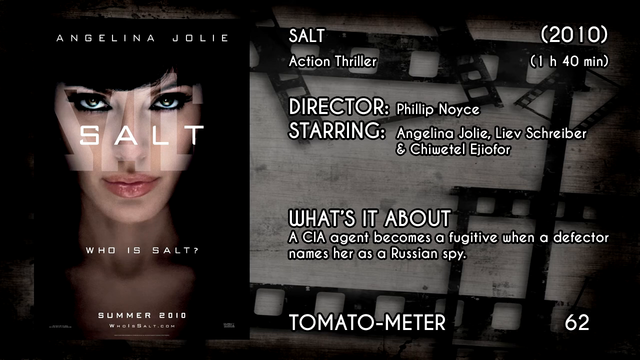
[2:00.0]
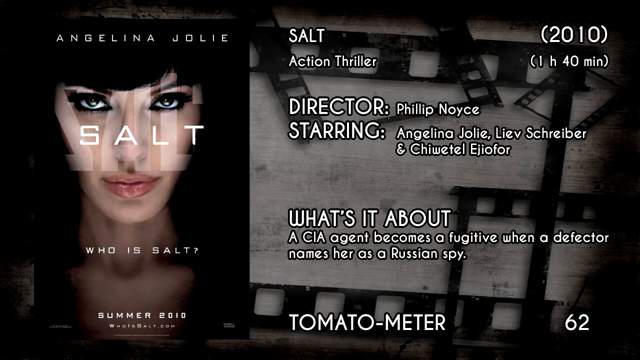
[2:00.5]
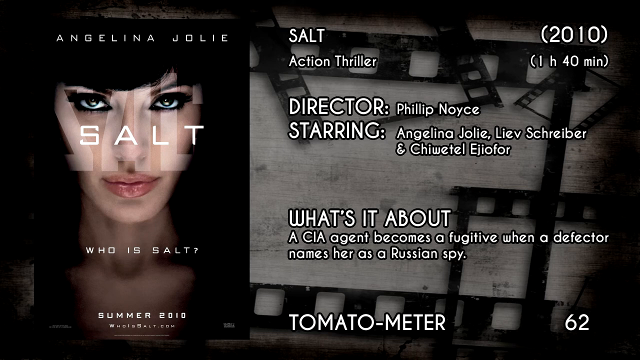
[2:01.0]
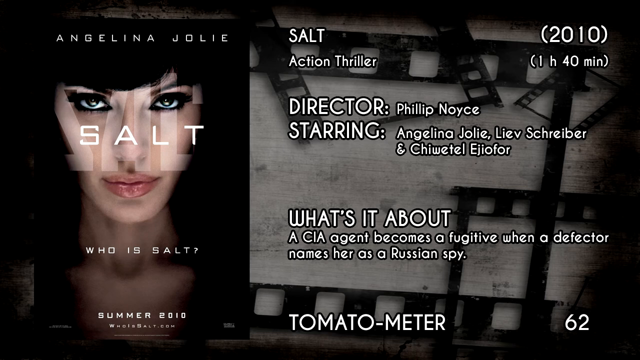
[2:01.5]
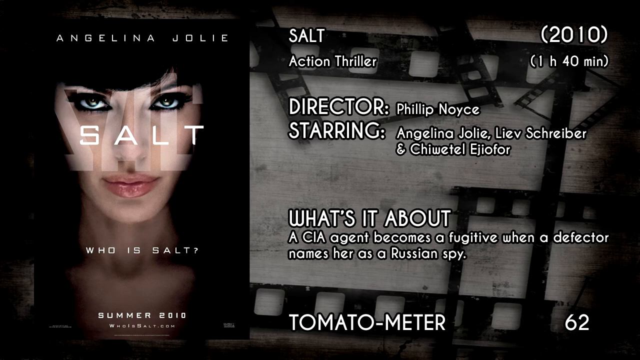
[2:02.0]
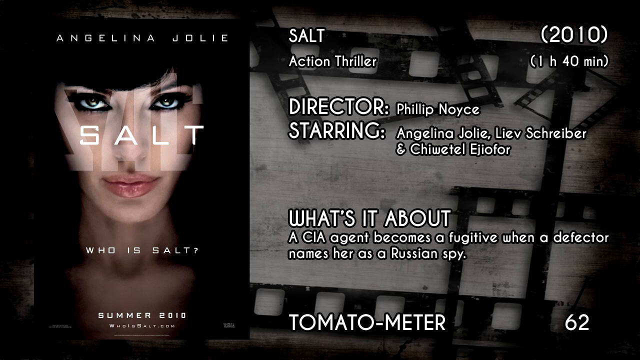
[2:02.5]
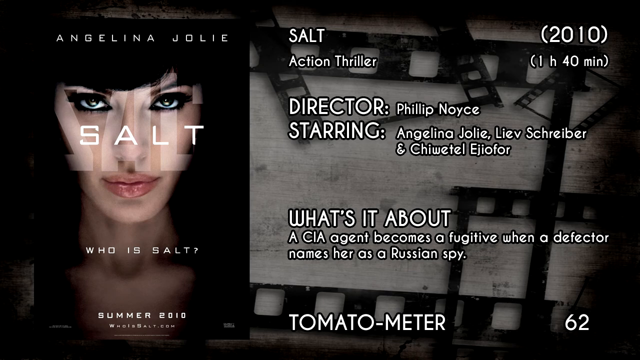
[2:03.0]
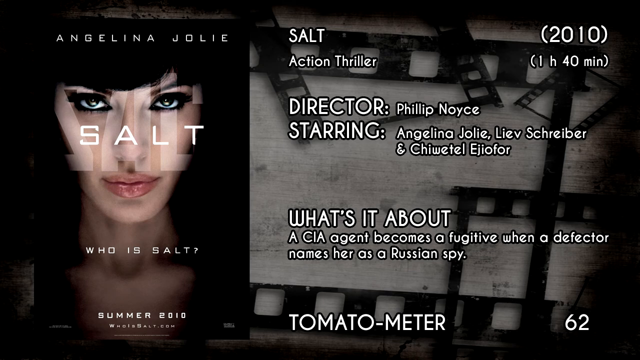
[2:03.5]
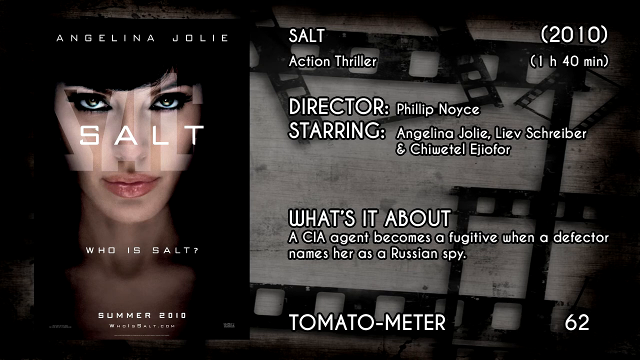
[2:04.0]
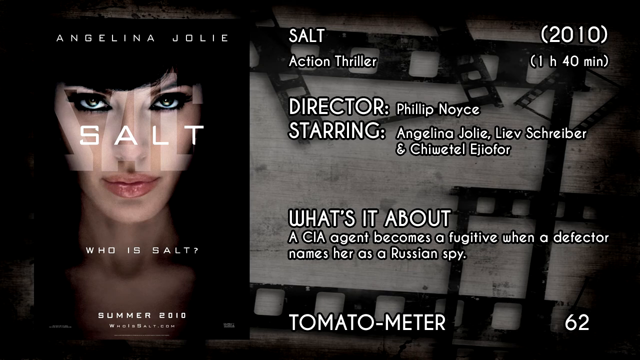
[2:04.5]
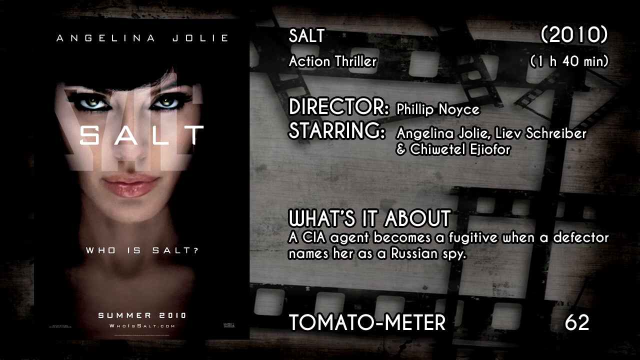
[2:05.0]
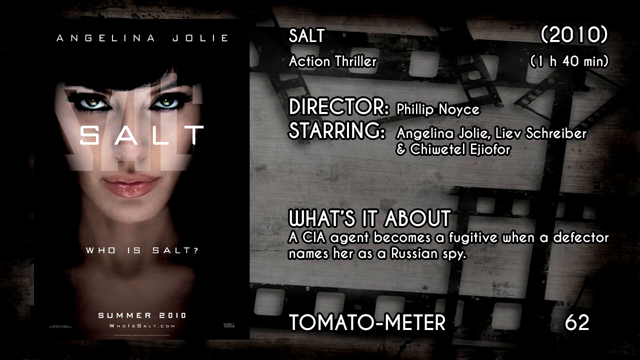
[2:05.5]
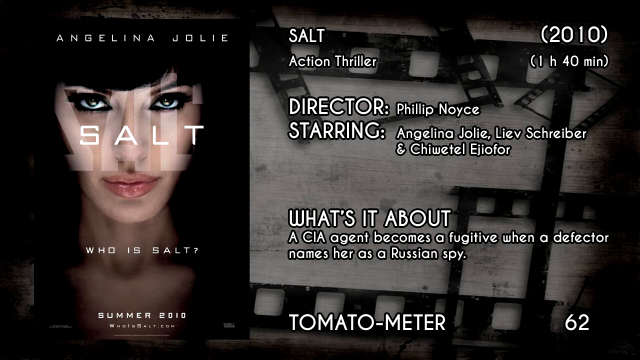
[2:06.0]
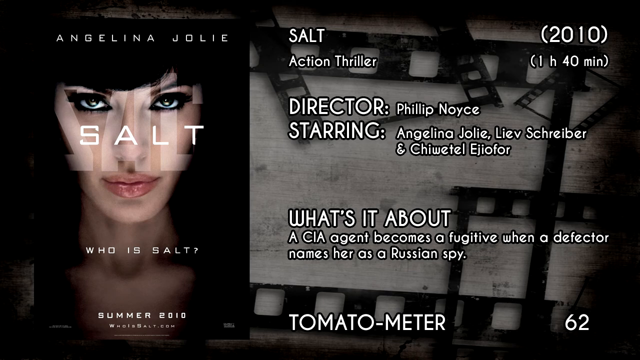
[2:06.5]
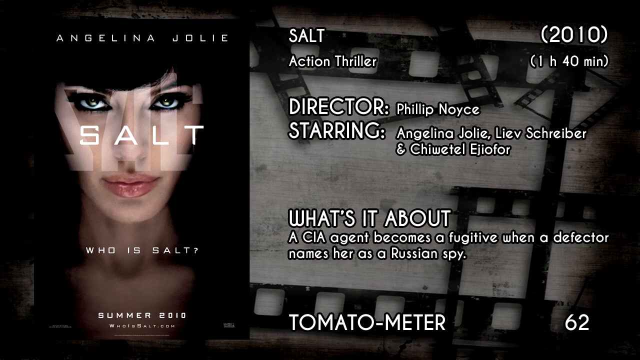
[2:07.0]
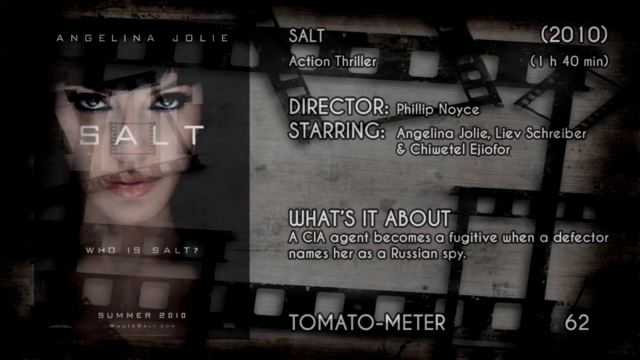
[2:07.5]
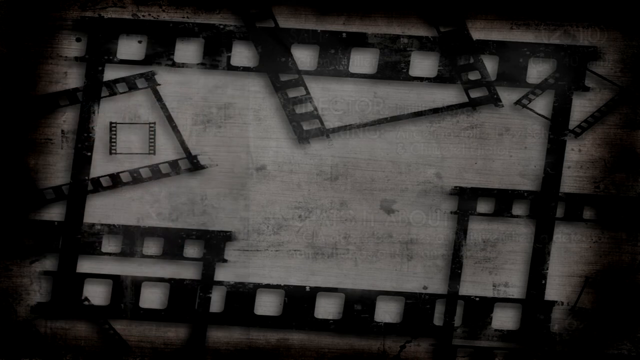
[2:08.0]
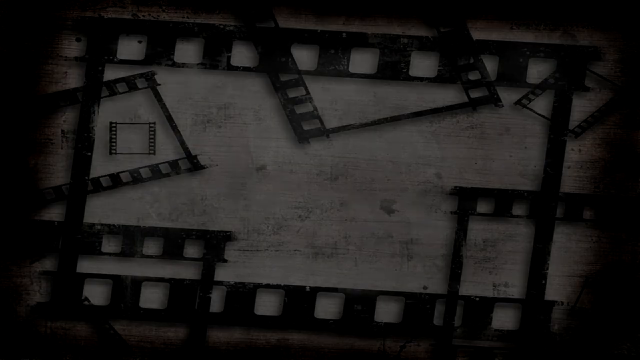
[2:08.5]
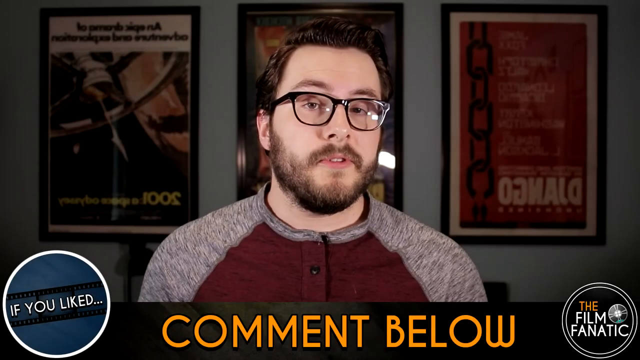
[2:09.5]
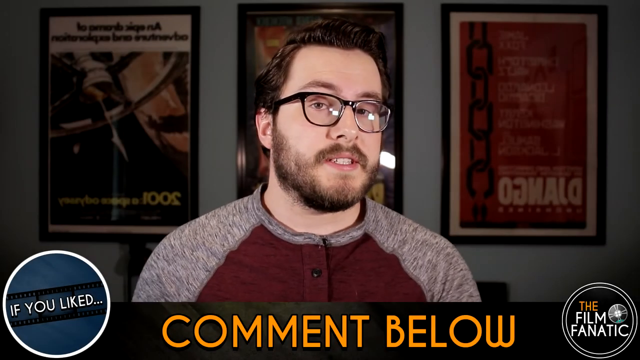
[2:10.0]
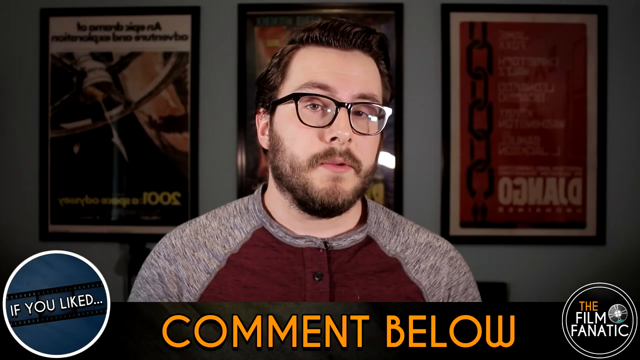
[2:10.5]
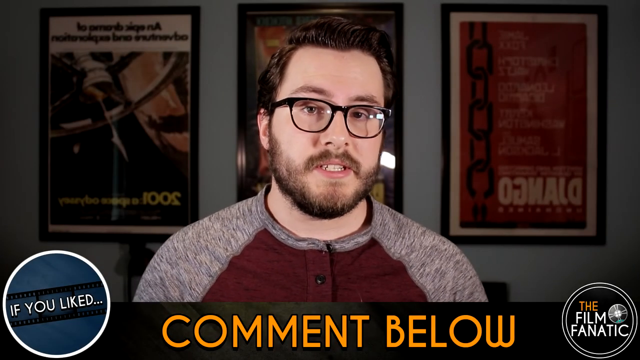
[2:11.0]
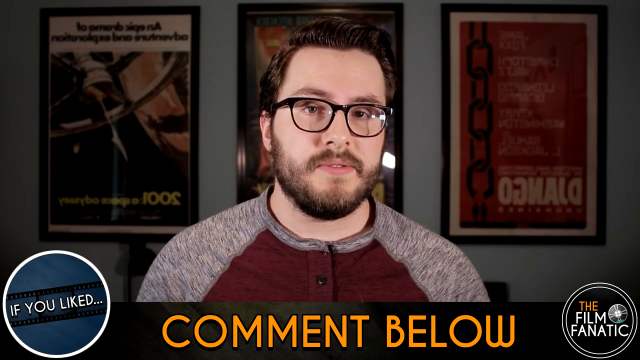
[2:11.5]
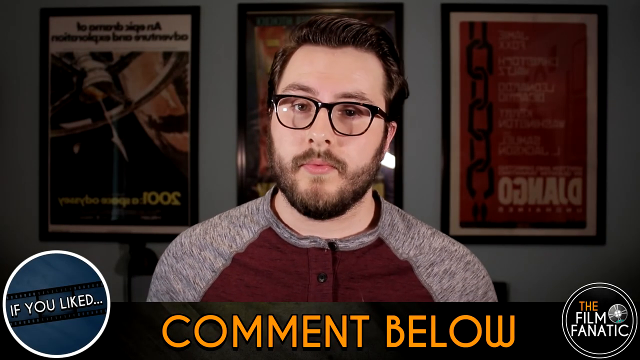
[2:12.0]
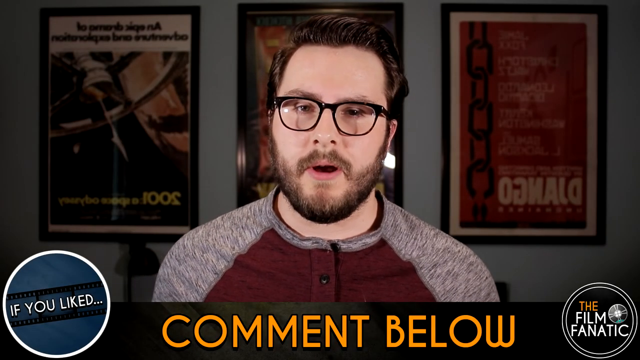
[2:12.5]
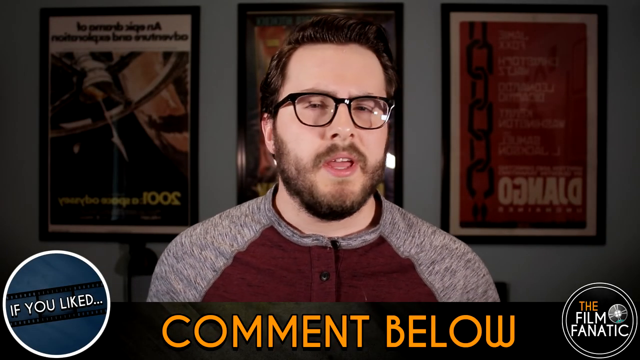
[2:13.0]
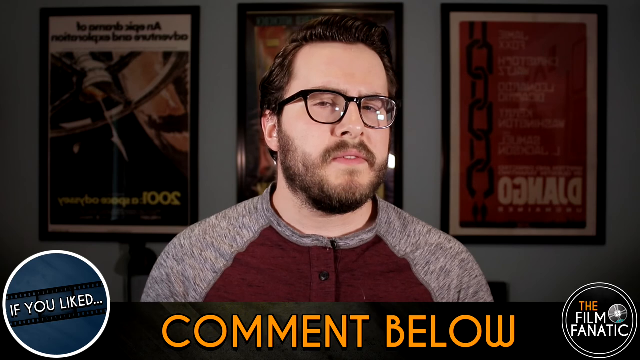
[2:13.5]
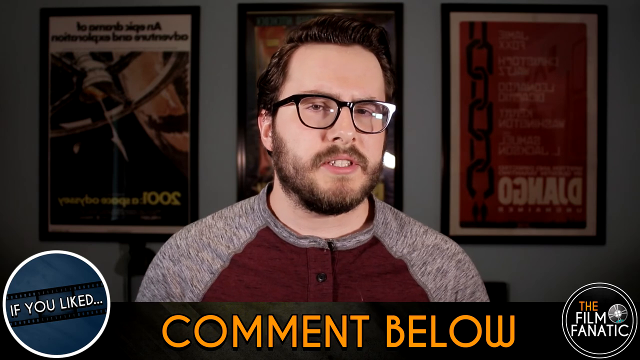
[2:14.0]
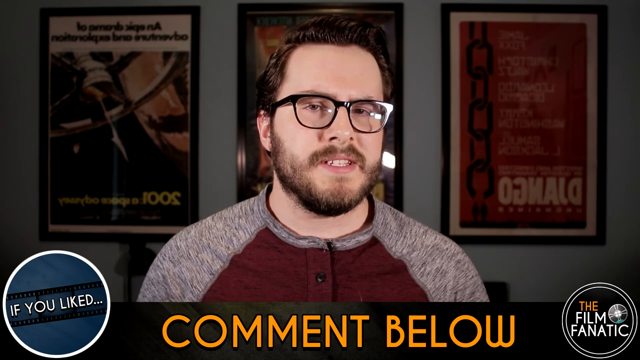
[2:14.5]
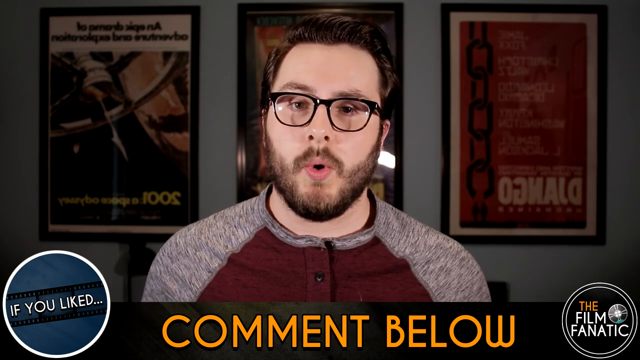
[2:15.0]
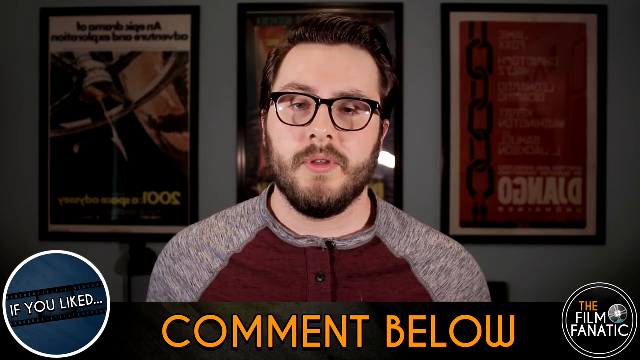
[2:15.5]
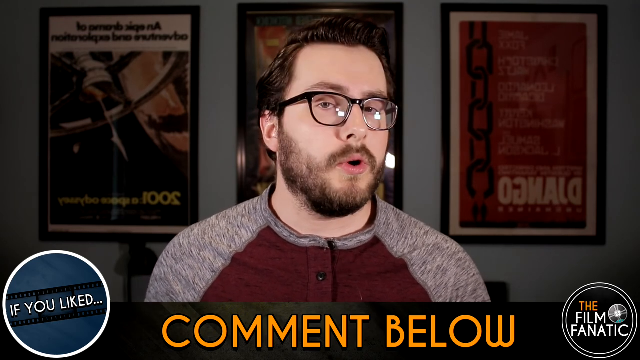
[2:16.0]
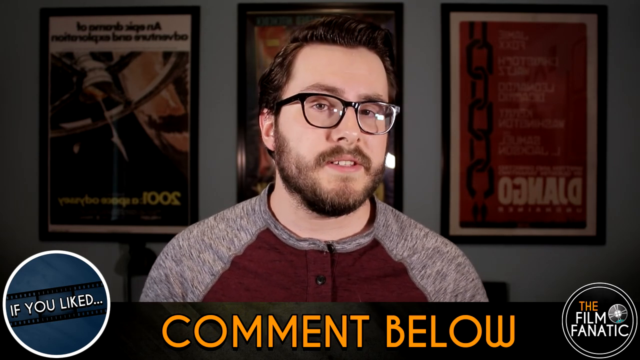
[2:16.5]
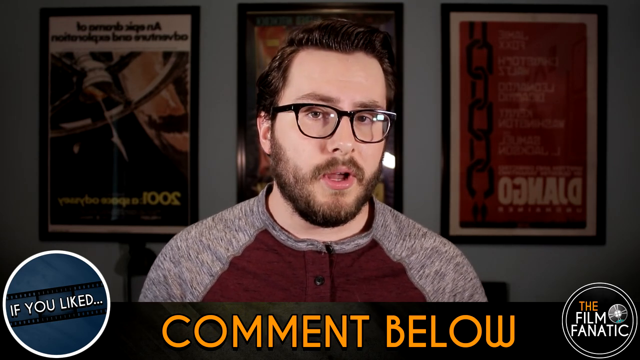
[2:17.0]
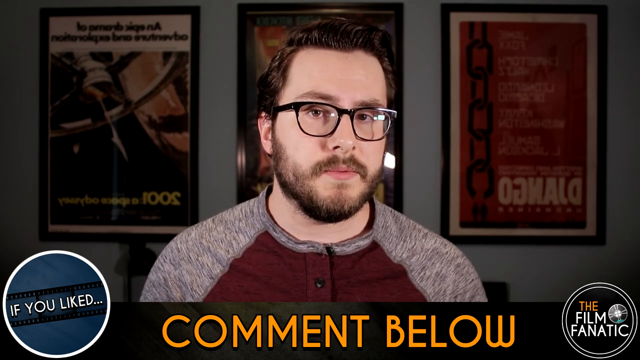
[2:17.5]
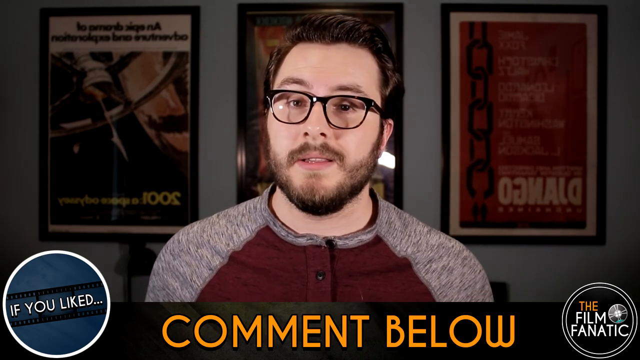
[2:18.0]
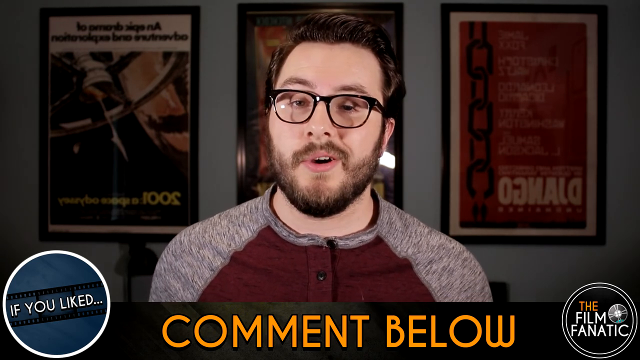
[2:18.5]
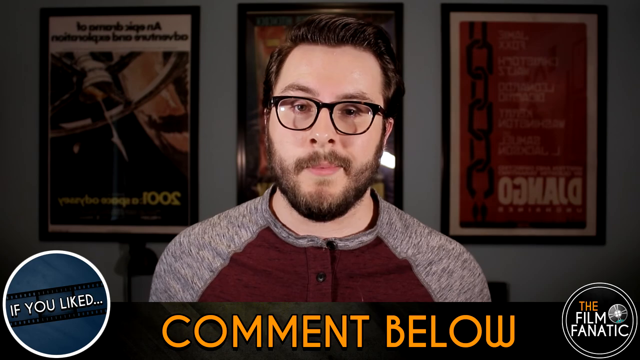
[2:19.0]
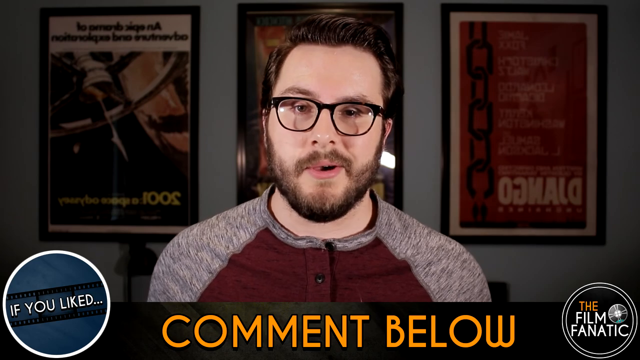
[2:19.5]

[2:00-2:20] A man with combed hair and glasses appears on camera, apparently giving his overall comments about the movies. Behind him are three movie posters, including 2001 Space Odyssey; the one in the middle is hard to see because his head blocks it.